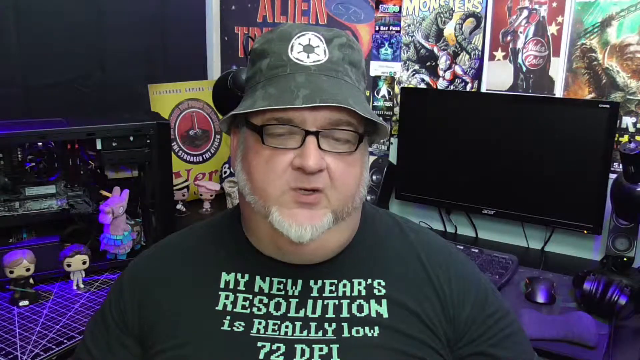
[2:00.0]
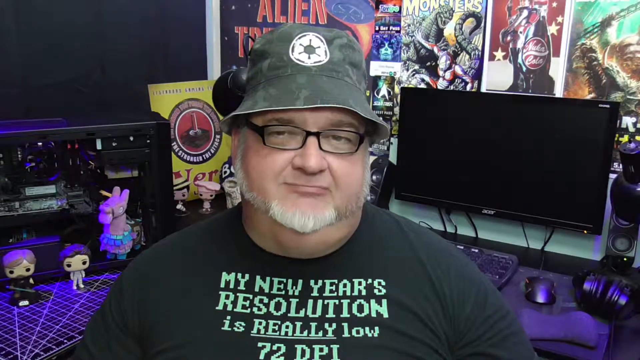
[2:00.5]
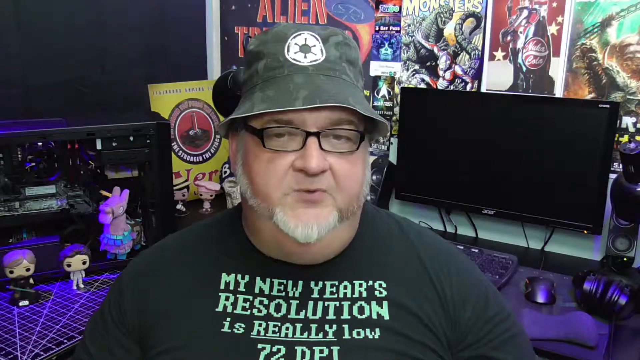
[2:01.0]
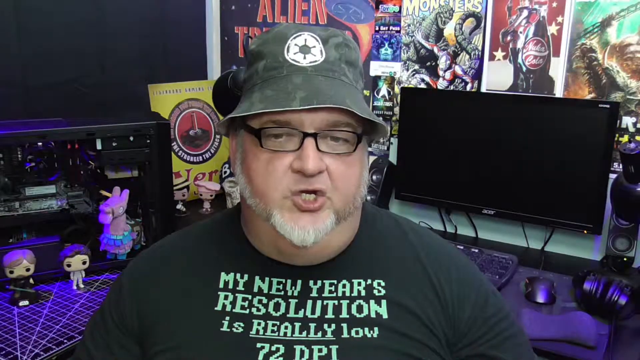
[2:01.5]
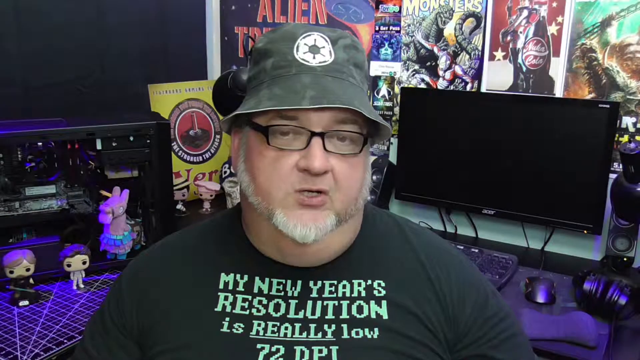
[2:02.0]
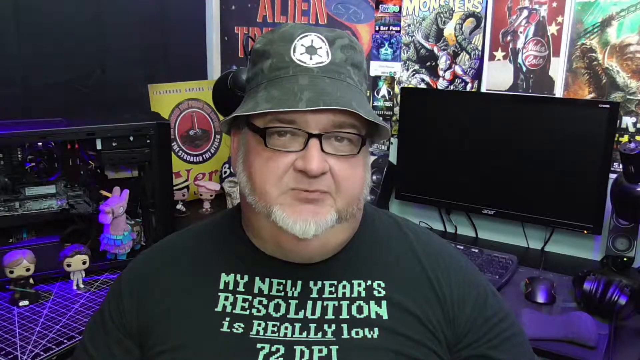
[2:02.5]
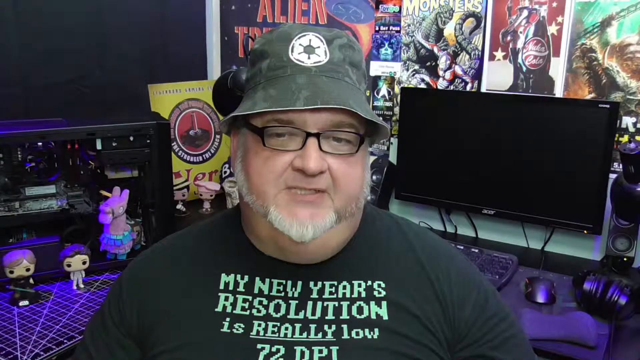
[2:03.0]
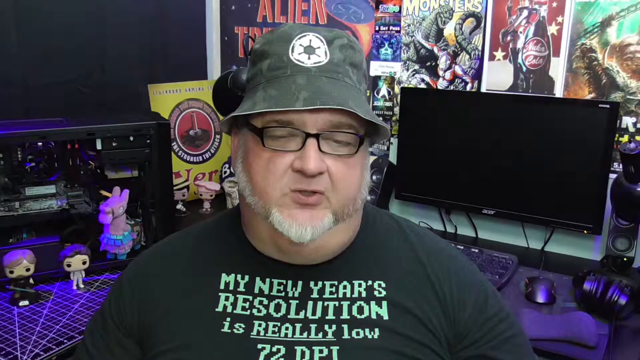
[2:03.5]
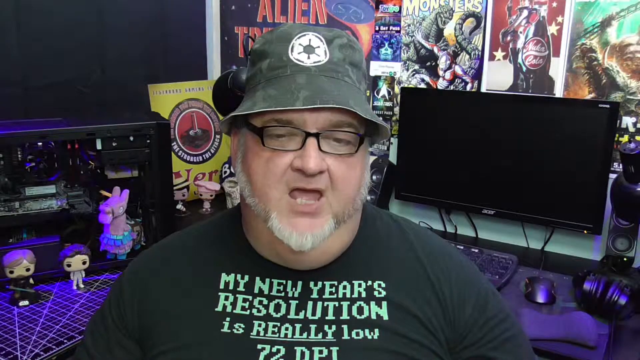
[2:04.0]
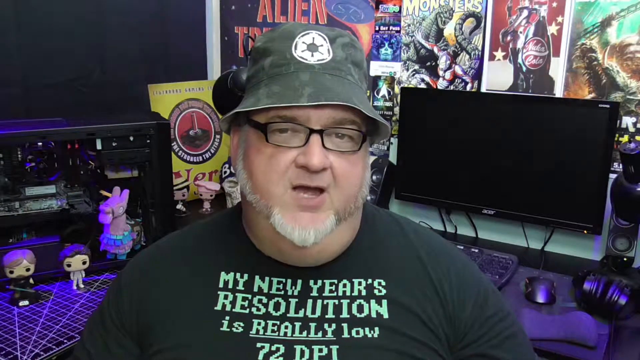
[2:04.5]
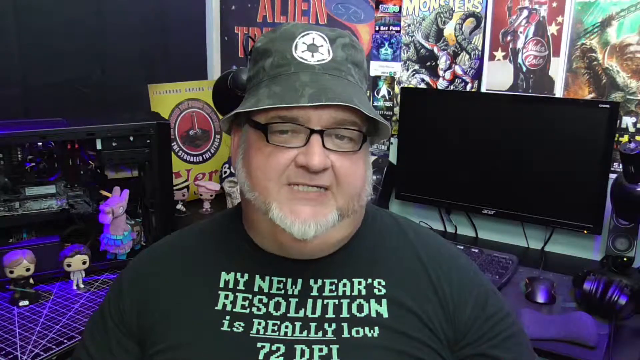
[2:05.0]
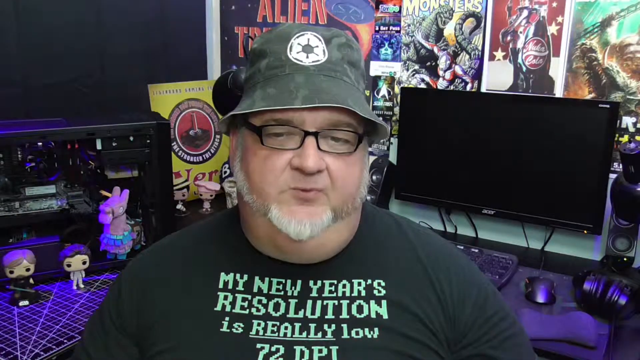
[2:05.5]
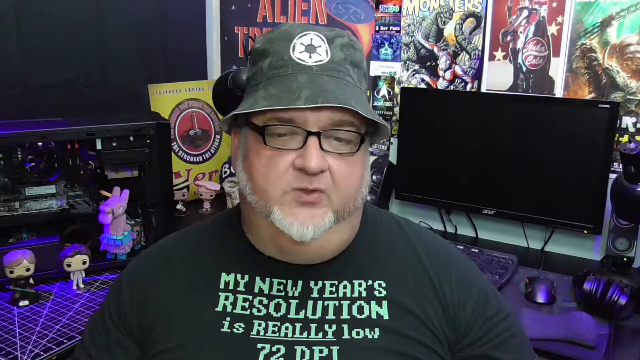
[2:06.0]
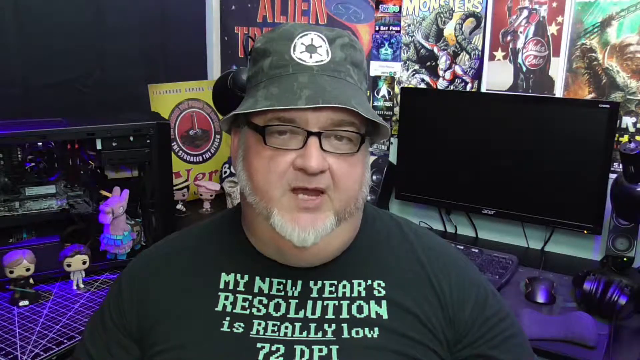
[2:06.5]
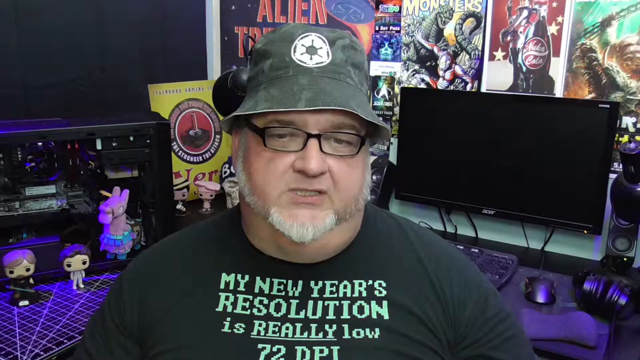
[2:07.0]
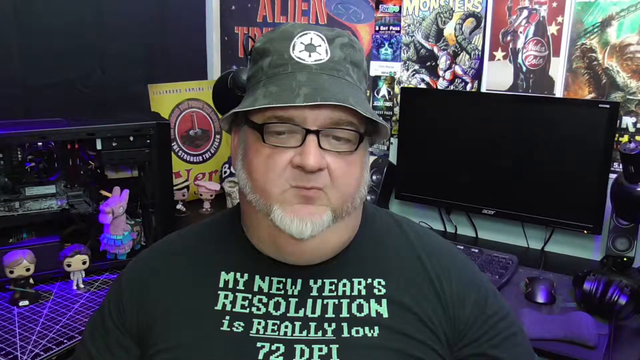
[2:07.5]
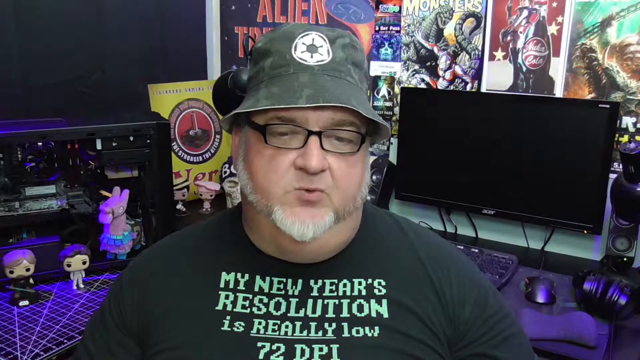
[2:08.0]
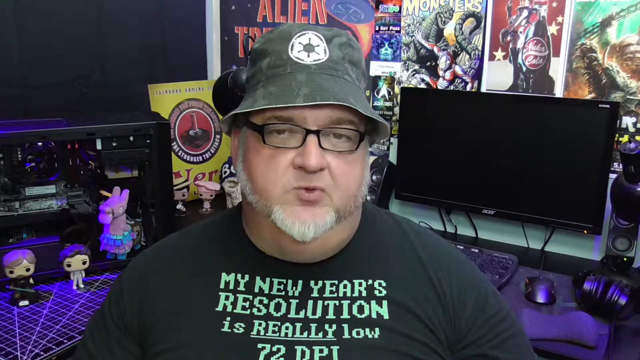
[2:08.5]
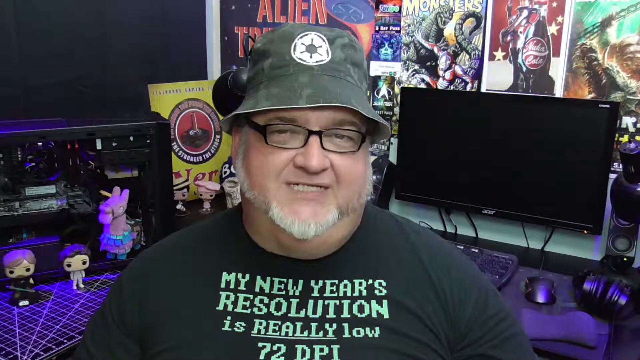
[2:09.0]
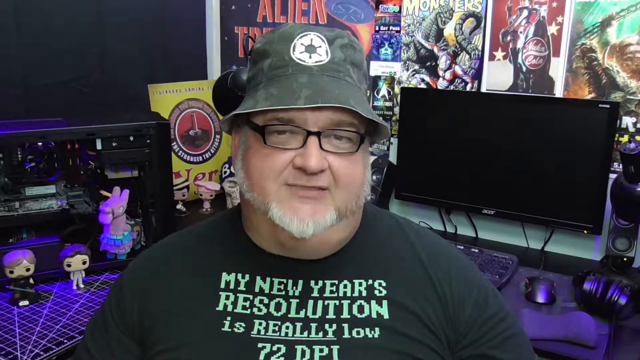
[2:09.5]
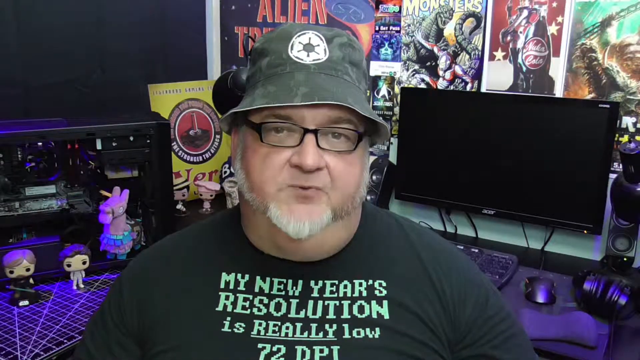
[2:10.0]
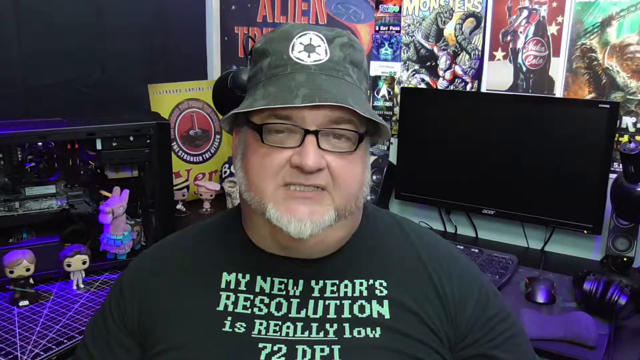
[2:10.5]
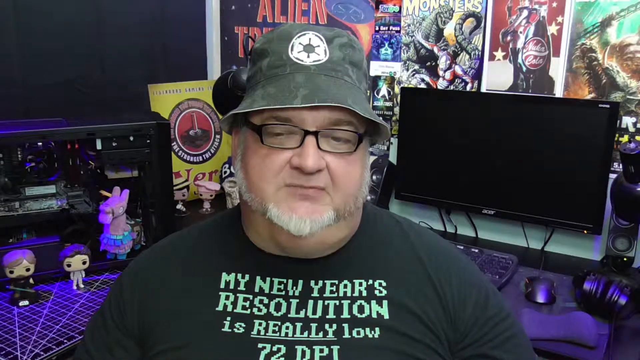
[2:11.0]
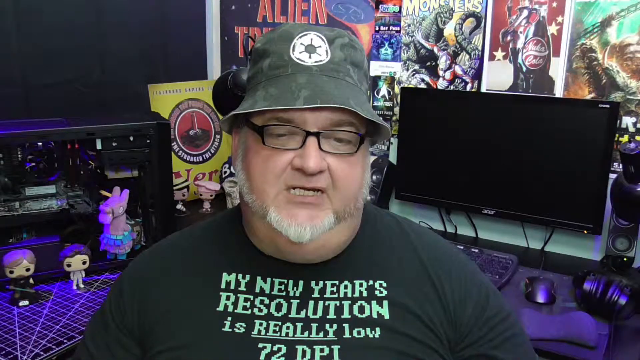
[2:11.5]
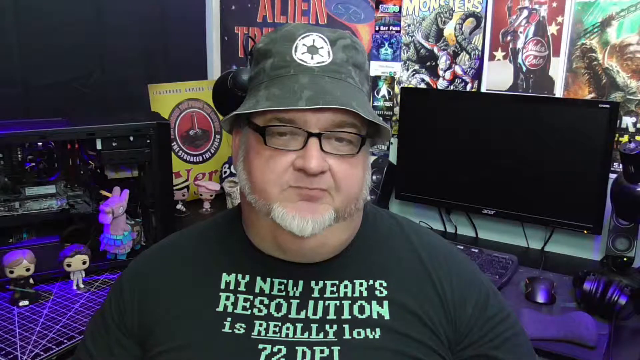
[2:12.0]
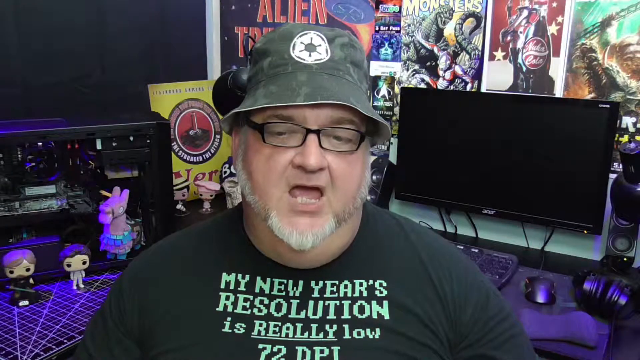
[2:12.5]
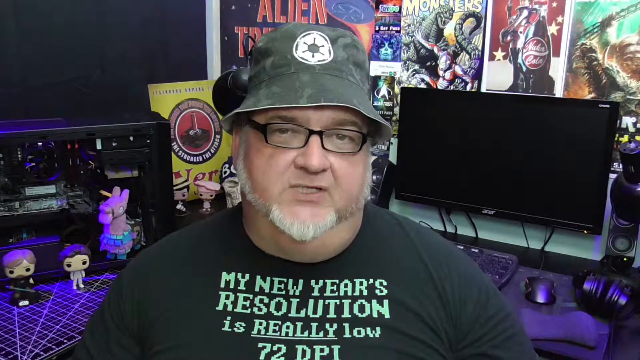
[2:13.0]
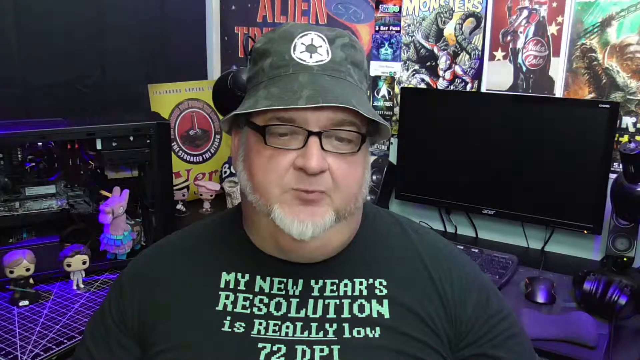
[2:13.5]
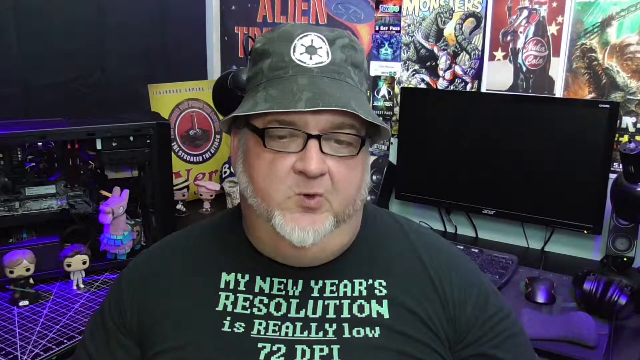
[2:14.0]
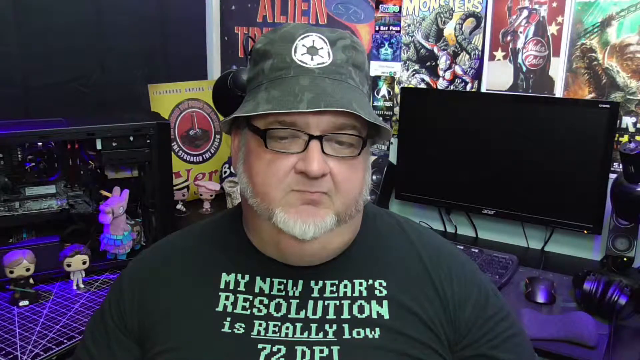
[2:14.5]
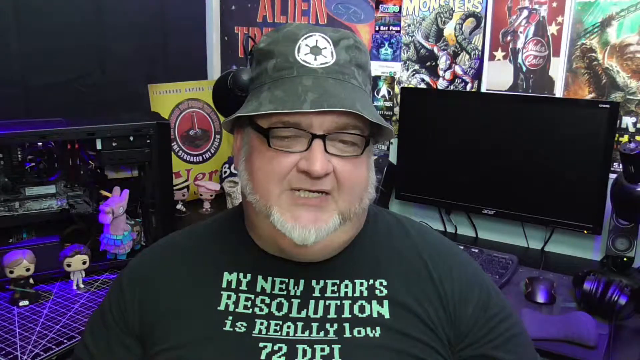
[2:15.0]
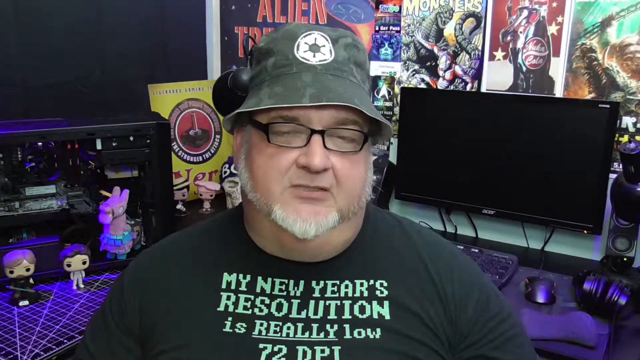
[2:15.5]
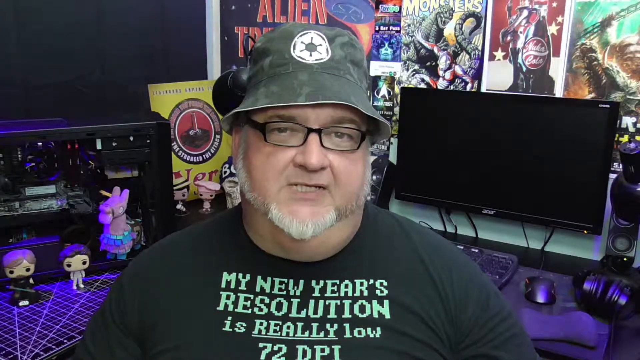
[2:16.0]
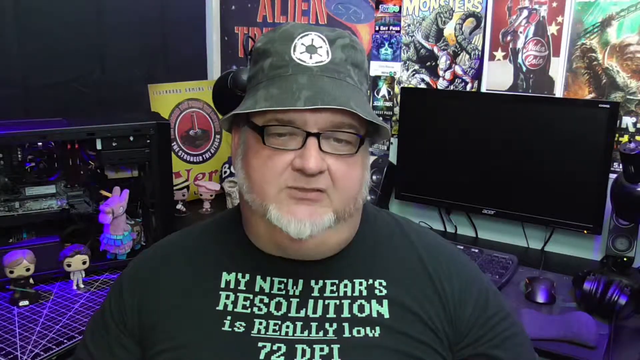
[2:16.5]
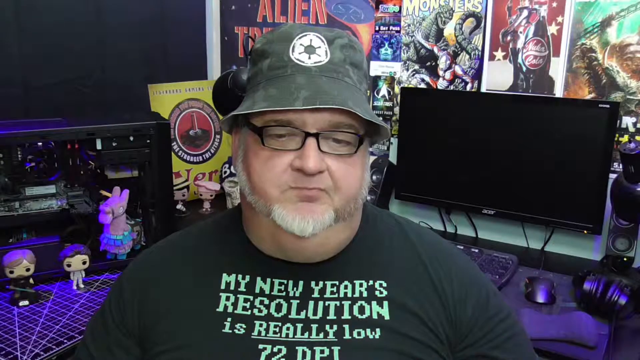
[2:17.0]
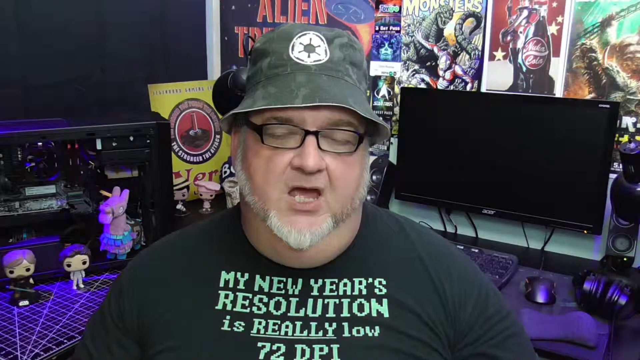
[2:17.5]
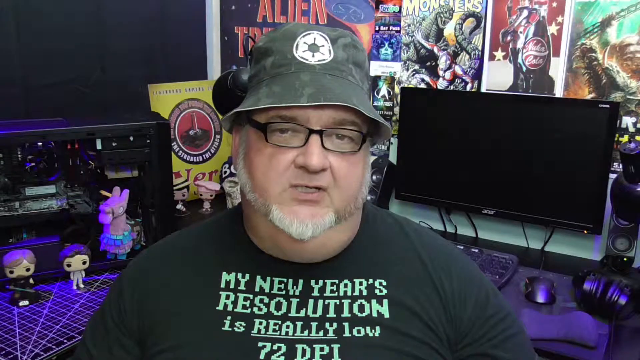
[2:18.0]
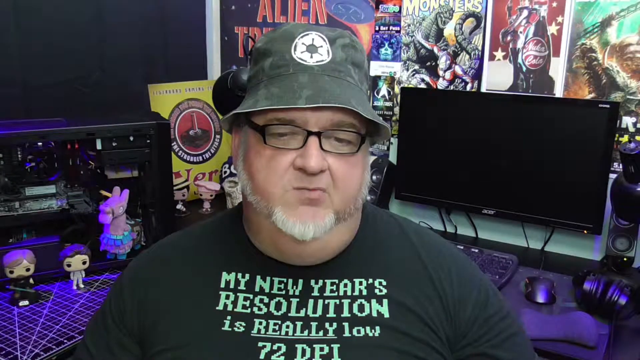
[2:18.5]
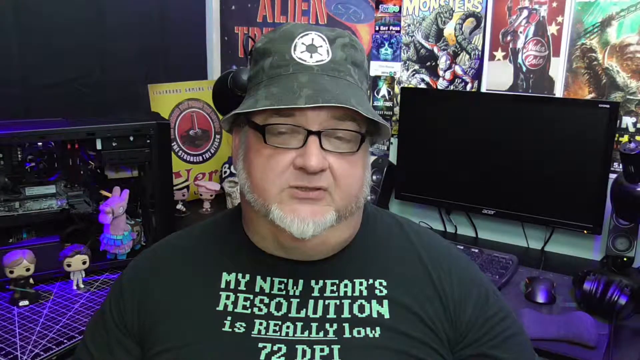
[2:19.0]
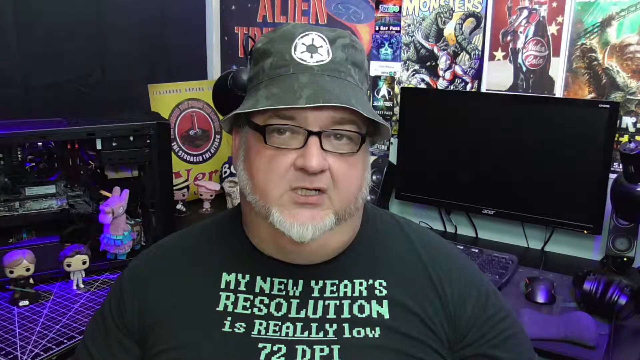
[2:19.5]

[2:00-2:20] The man kind of smiles at first and then continues speaking normally to the camera. He seems to speak at a slow pace, articulating well; the shapes of the words are clearly visible in his mouth movements. He appears to be white. He has no mustache; his little beard basically covers only his jawline, and it has white parts at the ends, while his eyebrows are black. No hair can be seen on his head because of the bucket hat.